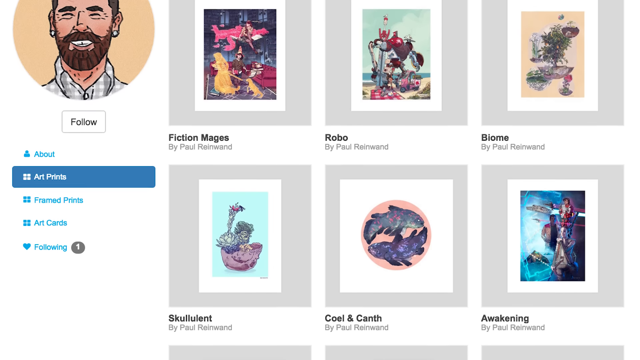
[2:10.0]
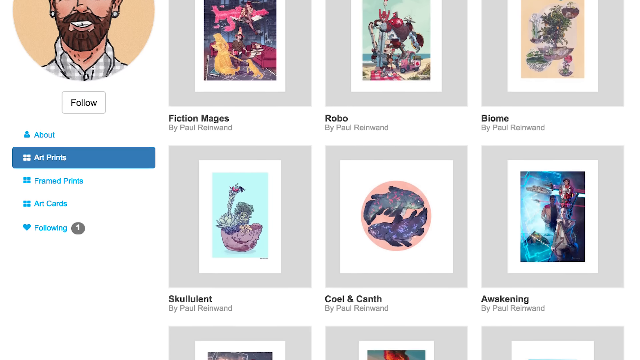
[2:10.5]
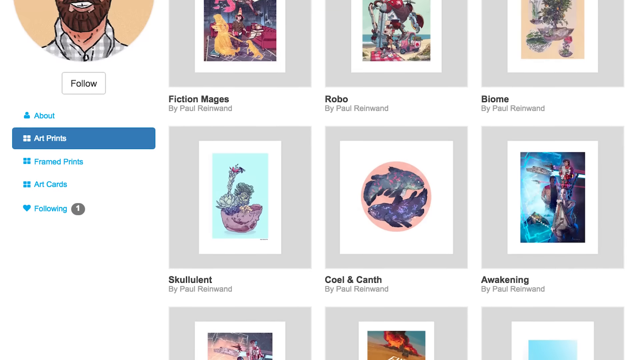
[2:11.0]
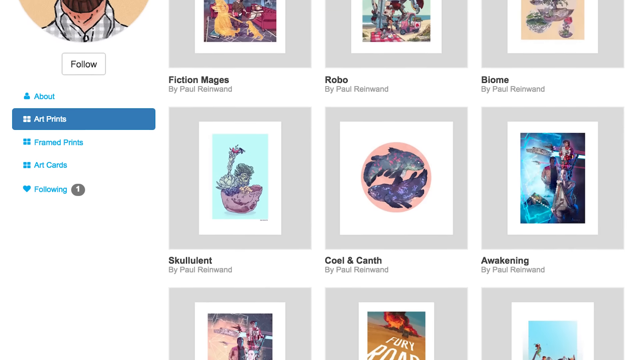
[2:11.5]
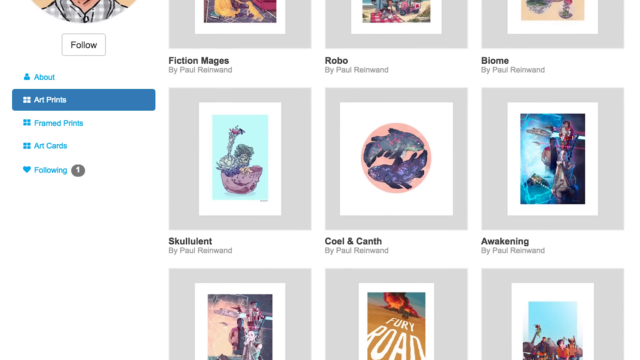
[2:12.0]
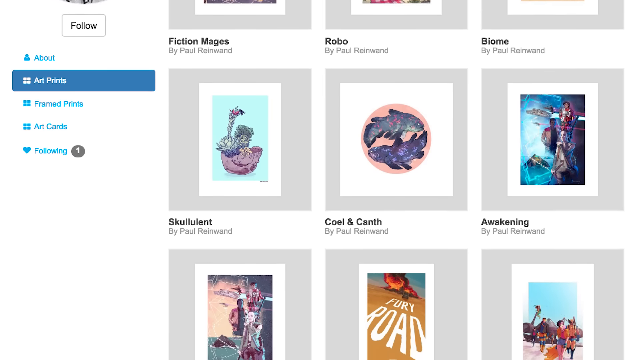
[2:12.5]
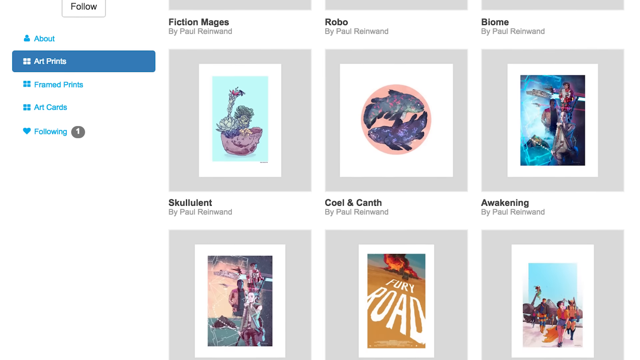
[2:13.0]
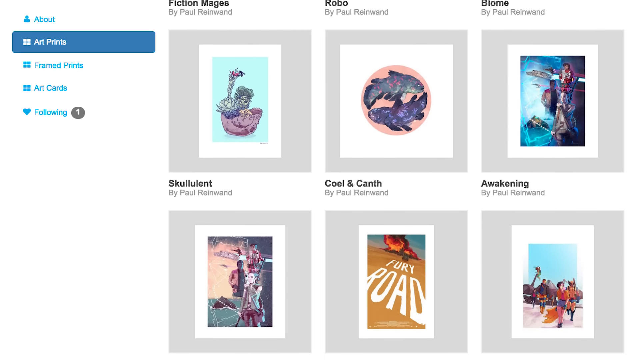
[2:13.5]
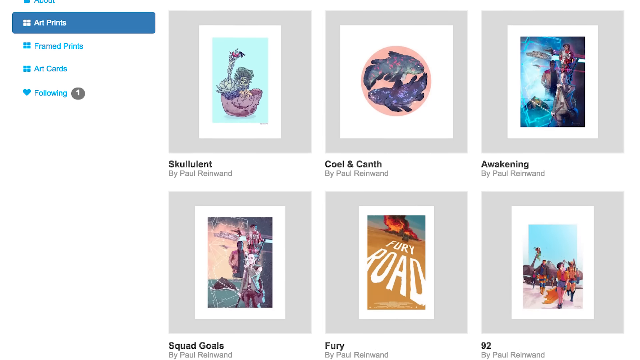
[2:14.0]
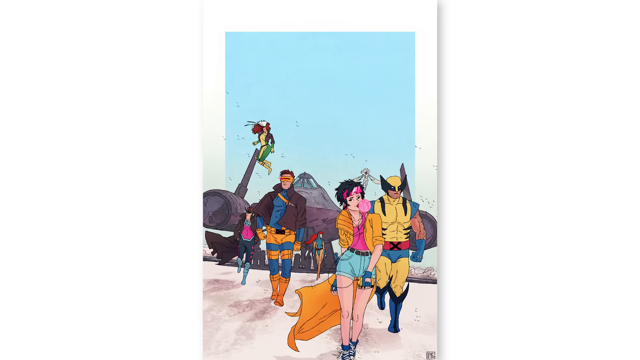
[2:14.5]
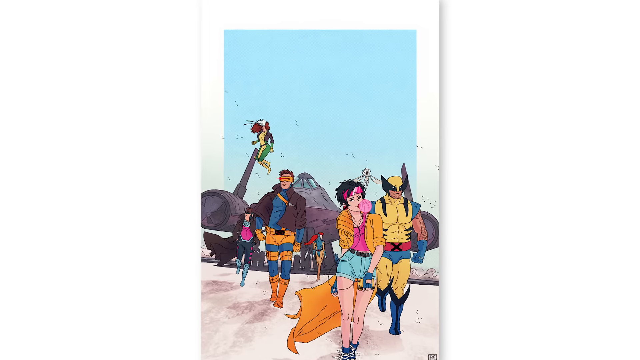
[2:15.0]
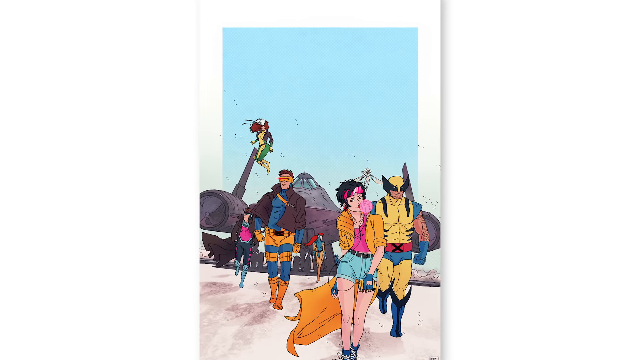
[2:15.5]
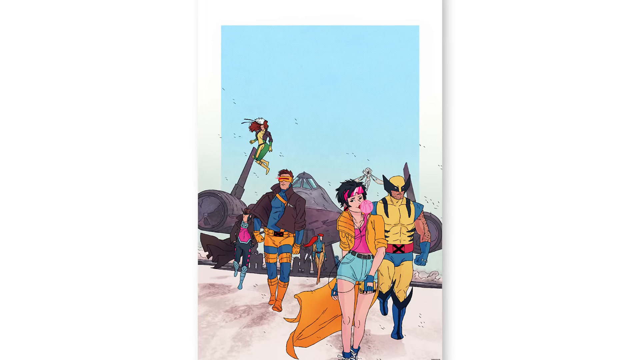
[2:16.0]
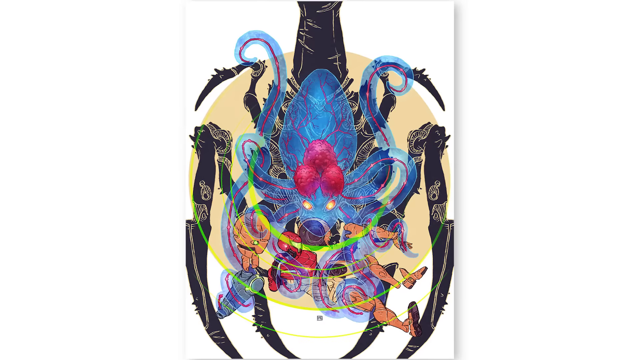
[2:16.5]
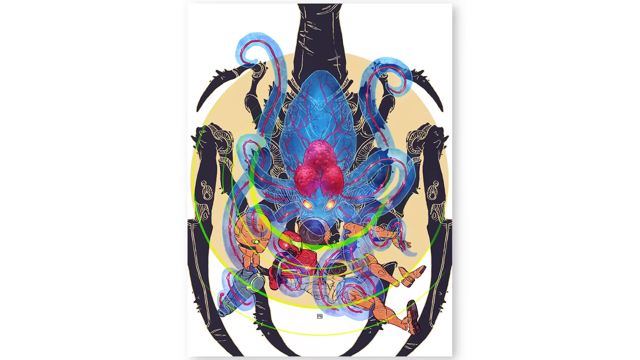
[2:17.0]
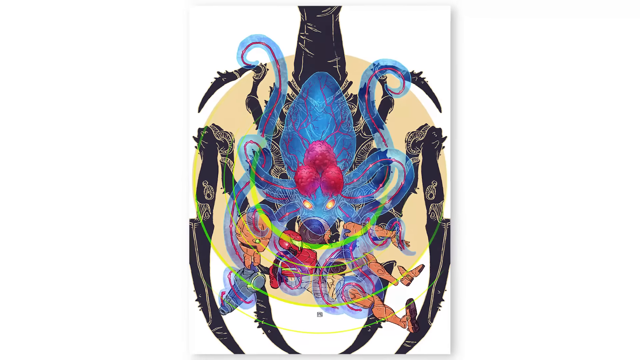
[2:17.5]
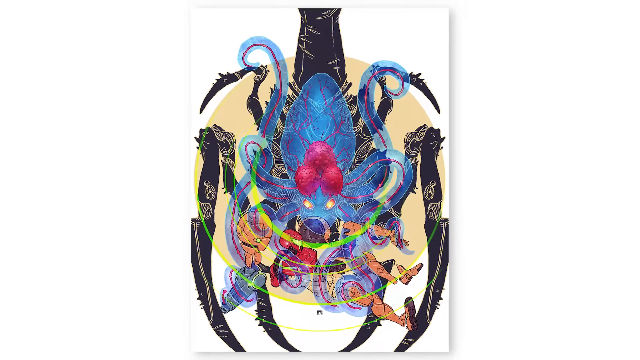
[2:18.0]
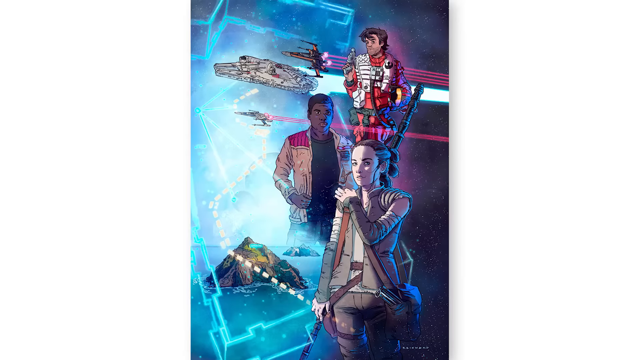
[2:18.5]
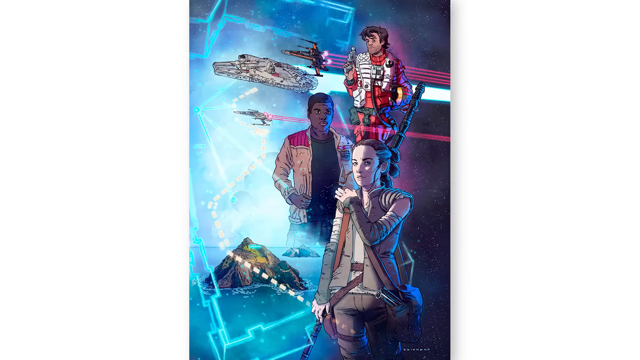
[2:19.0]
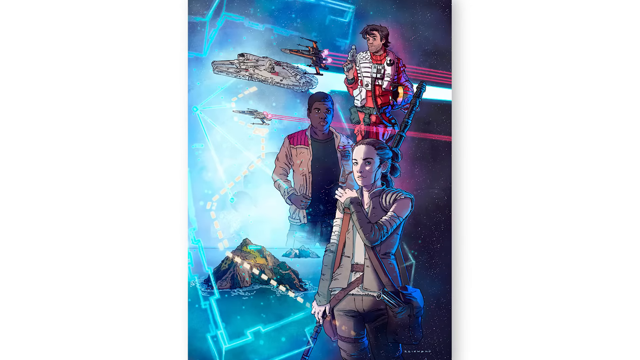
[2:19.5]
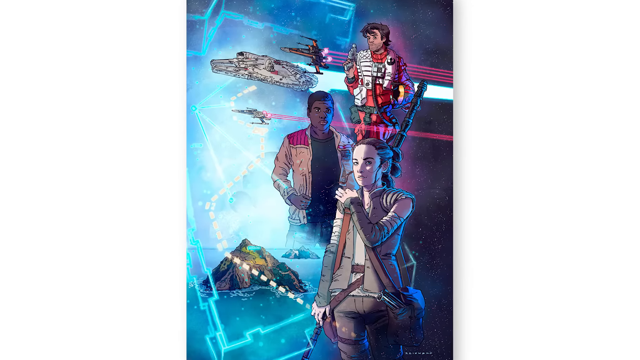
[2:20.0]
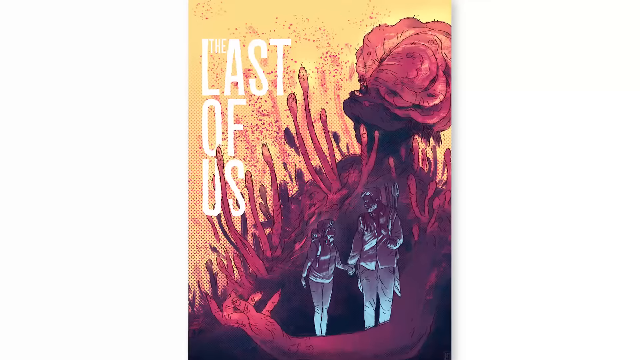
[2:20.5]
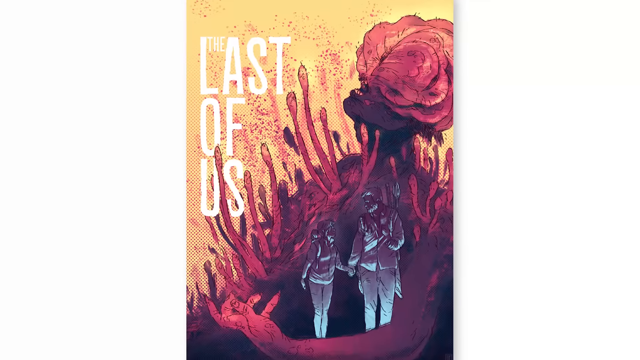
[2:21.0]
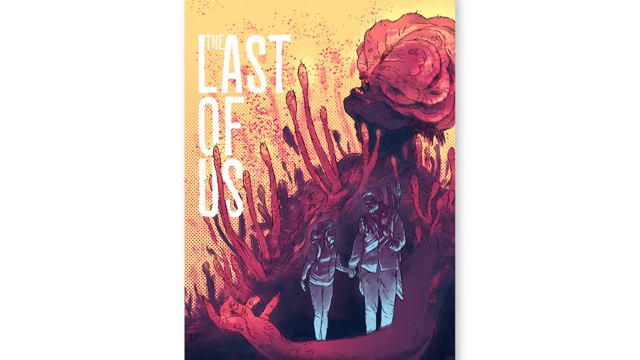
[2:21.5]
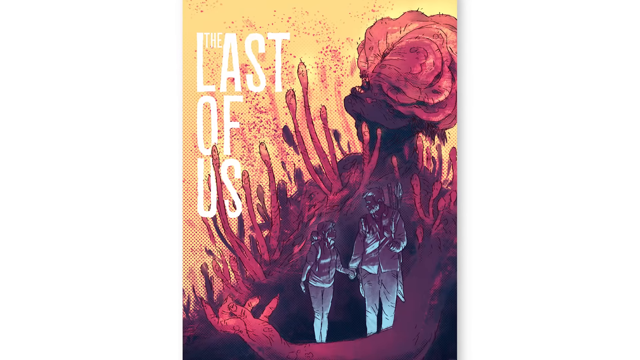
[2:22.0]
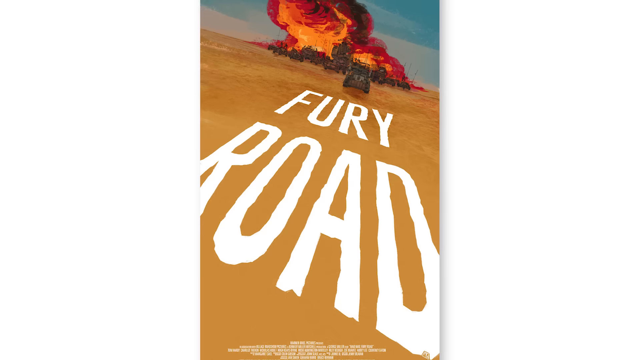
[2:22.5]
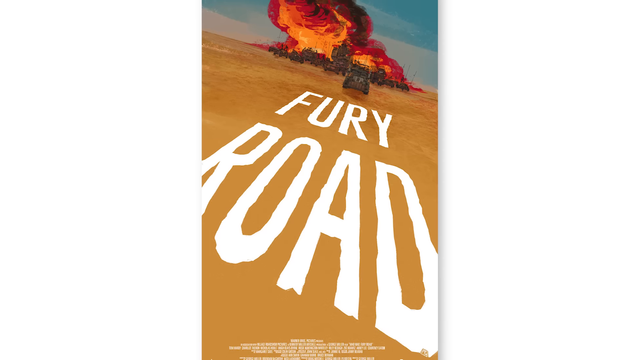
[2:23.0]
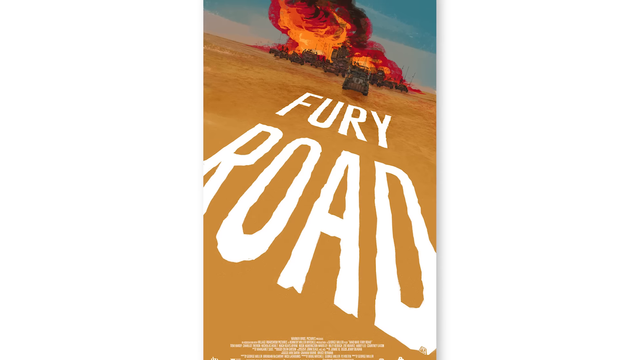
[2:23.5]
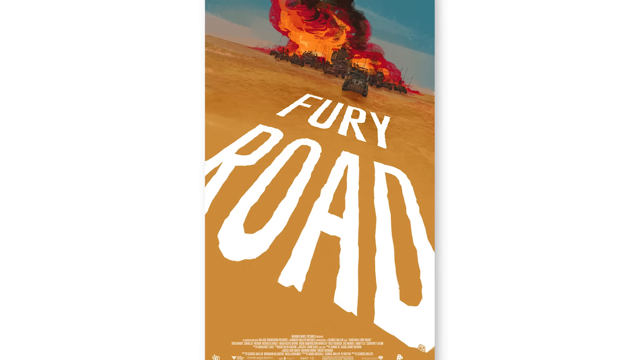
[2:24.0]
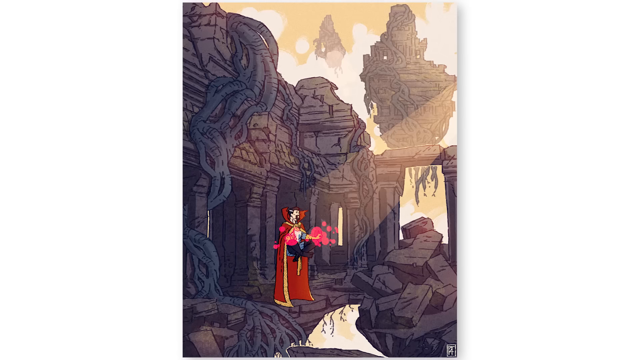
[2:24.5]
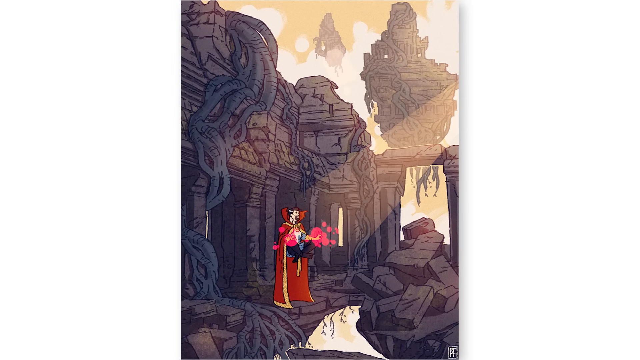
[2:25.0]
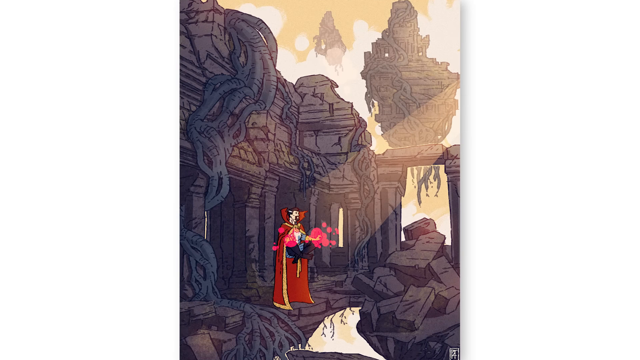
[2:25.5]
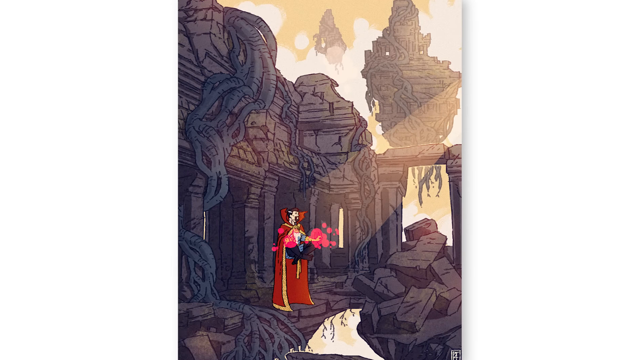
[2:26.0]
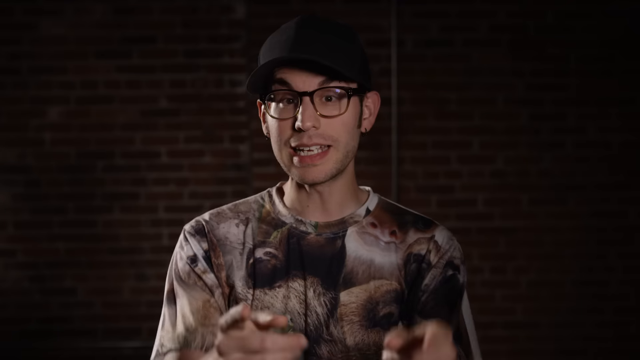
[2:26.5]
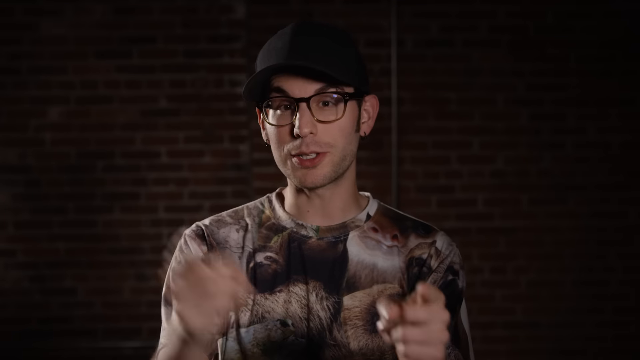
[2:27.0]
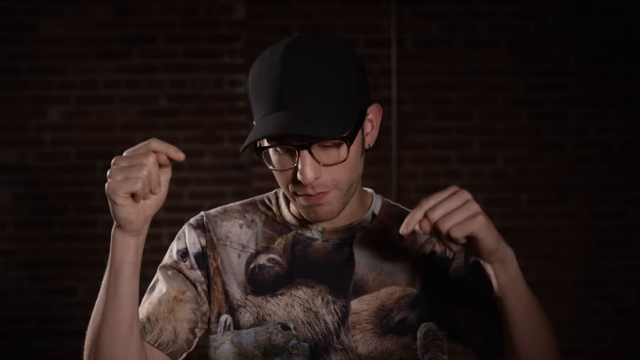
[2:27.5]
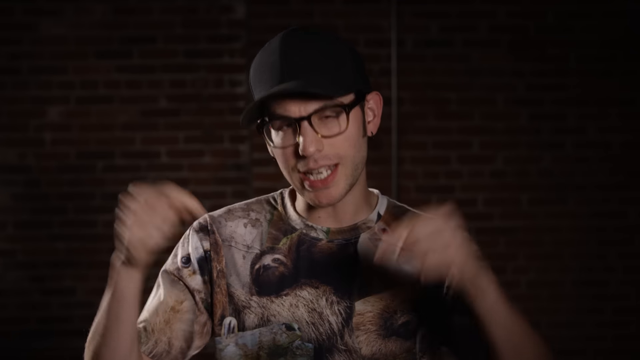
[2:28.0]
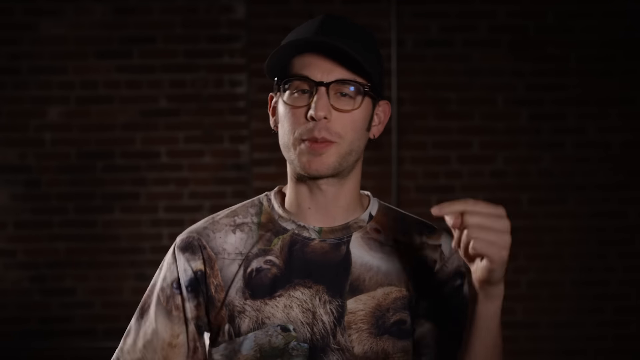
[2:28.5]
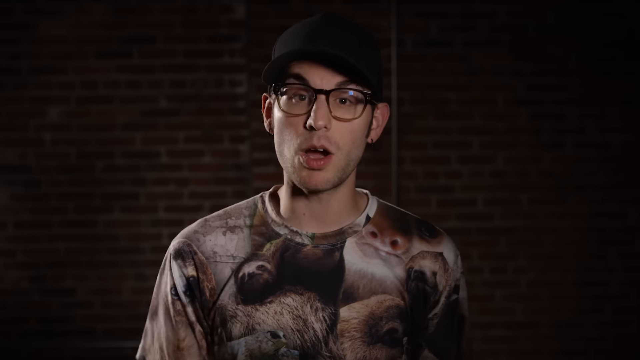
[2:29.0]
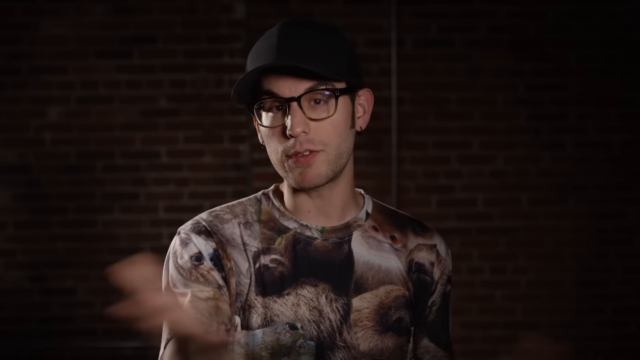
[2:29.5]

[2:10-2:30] Several art prints by Paul Reinwind are shown, all with the same kind of image in the middle, white and then gray; one is called Succulent and another Awakening. A print of the X-Men shows Wolverine with characters such as Scott Summers and Rogue, with the X-Jet behind them, and the view zooms in. An image shows a blue, somewhat translucent creature with tentacles and big legs that looks like some kind of monster. A Star Wars image shows a Jedi with ships behind it and characters from one of the more recent Star Wars movies, with an island at the bottom. A print for The Last of Us shows a zombie sprouting things, with a man and a girl seemingly standing in front of it. An ad for Fury Road shows a bunch of cars that seem to be on fire in a vast desert.